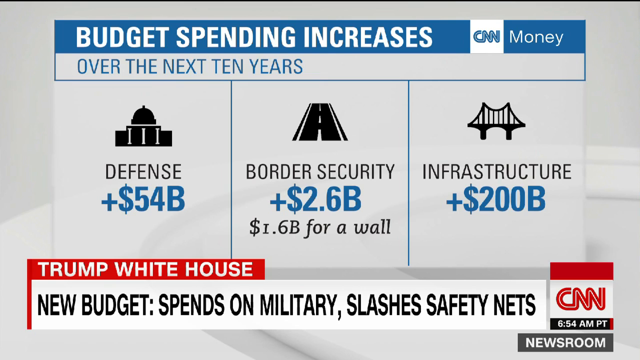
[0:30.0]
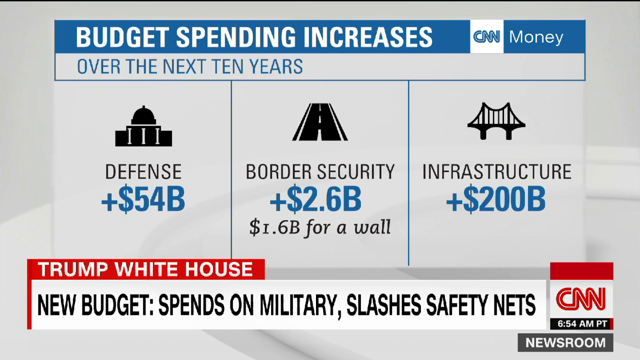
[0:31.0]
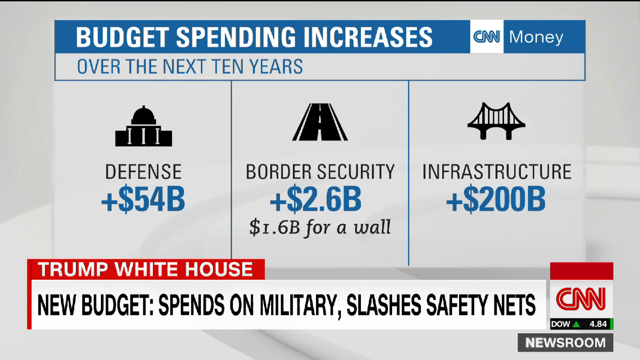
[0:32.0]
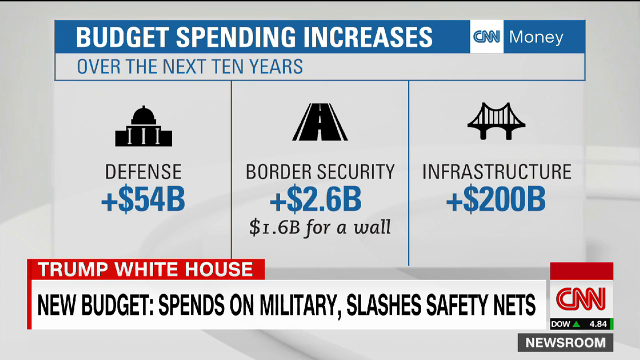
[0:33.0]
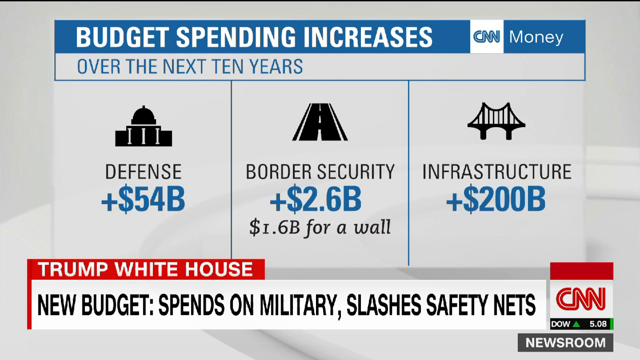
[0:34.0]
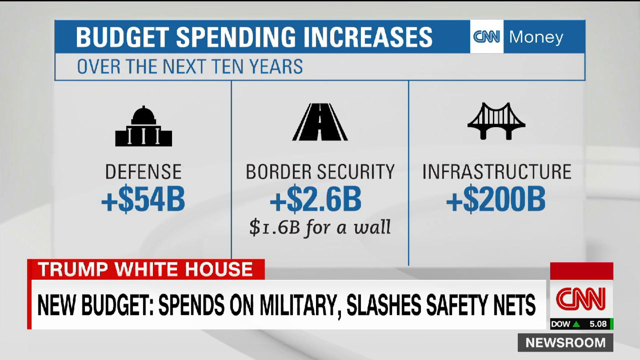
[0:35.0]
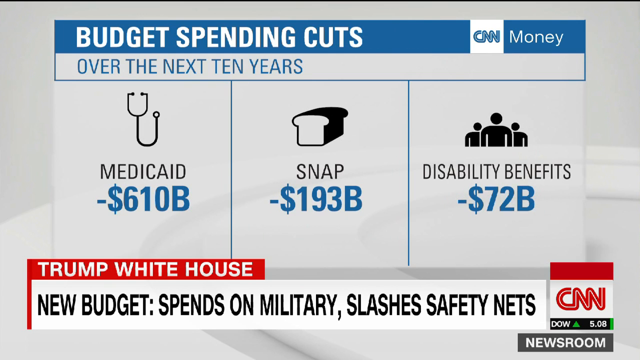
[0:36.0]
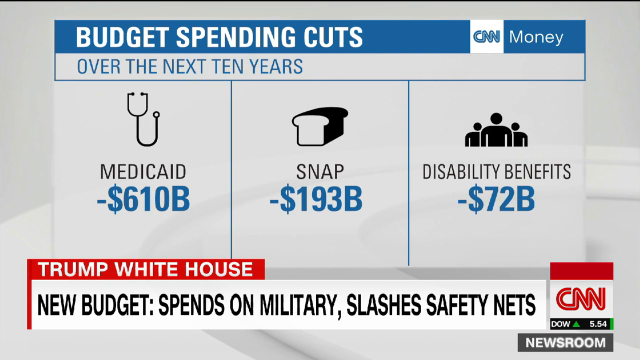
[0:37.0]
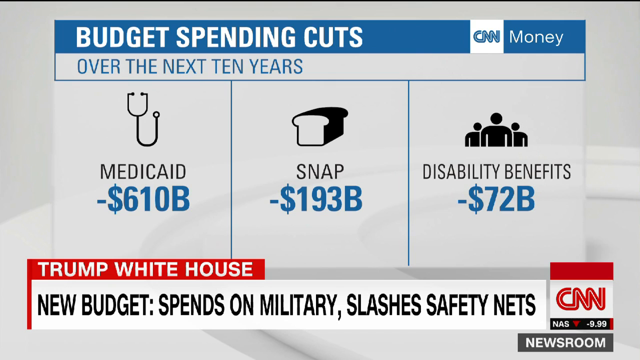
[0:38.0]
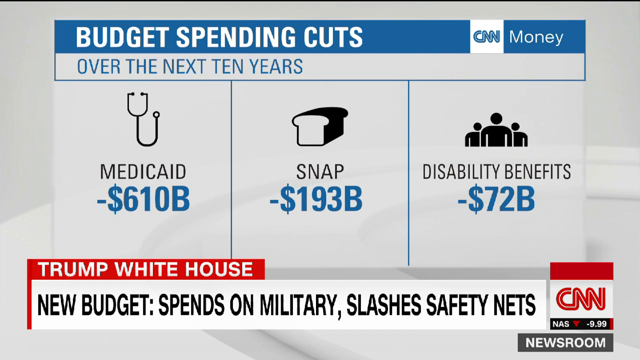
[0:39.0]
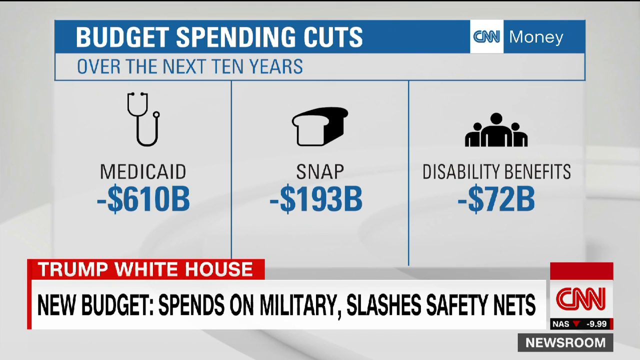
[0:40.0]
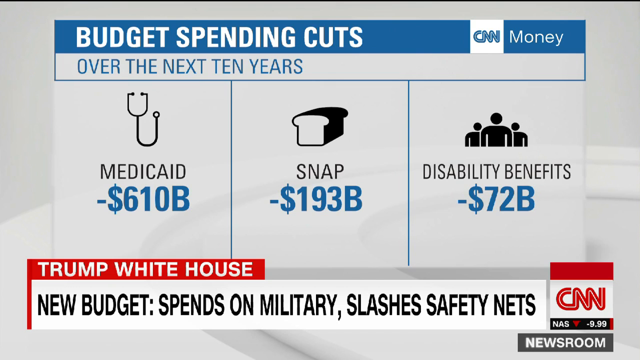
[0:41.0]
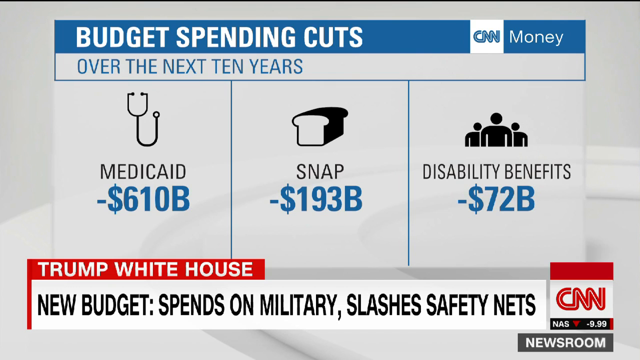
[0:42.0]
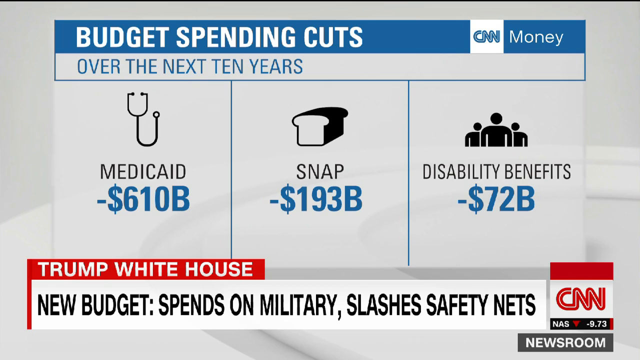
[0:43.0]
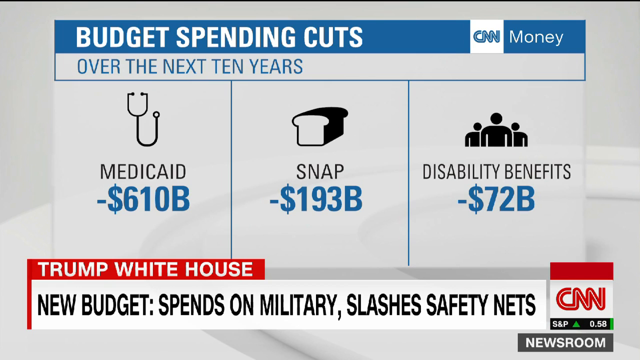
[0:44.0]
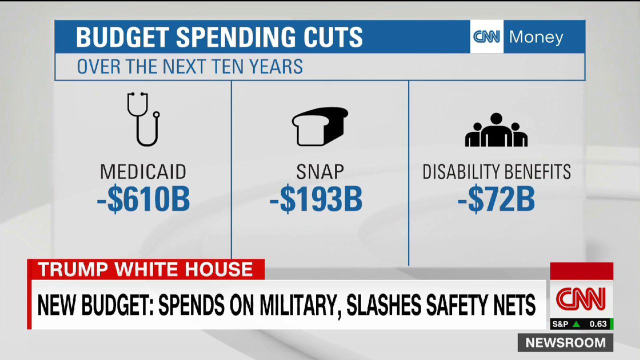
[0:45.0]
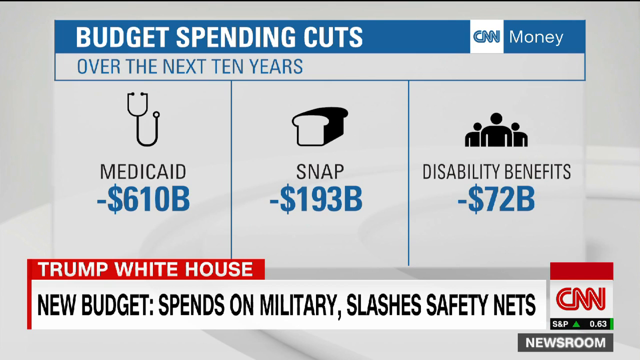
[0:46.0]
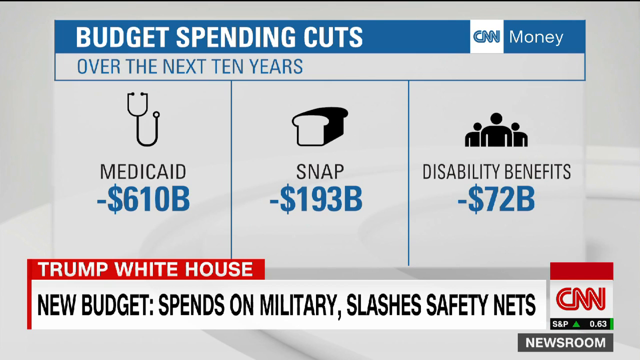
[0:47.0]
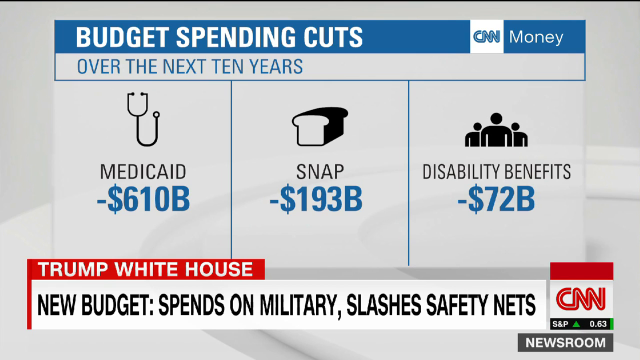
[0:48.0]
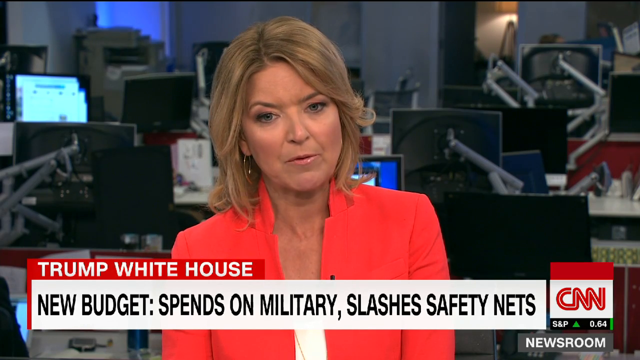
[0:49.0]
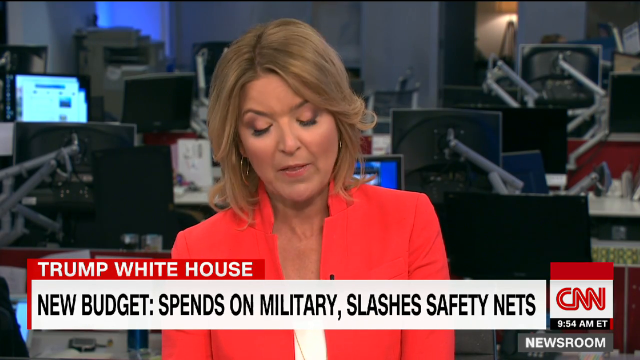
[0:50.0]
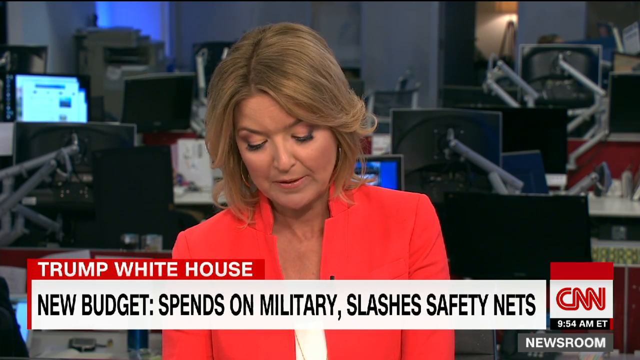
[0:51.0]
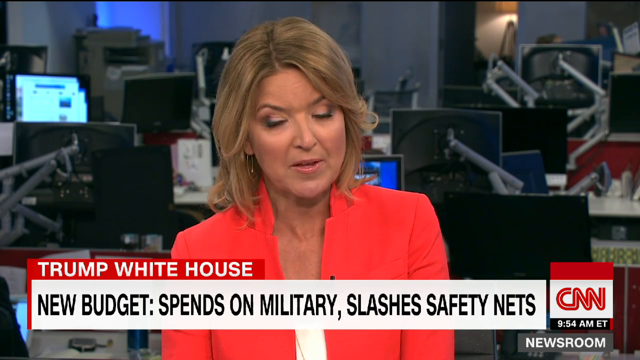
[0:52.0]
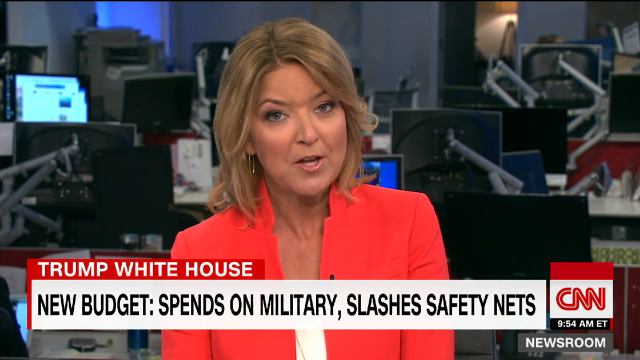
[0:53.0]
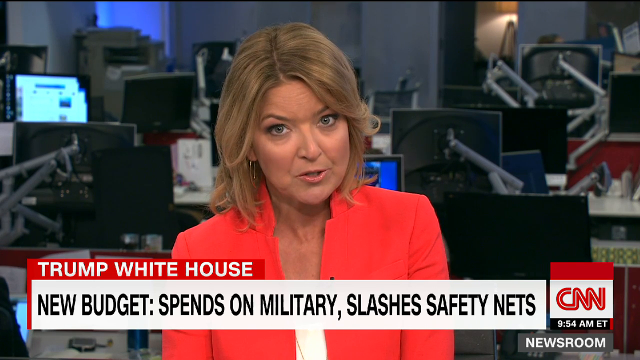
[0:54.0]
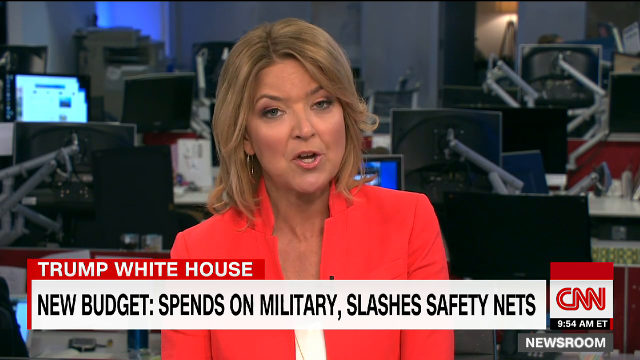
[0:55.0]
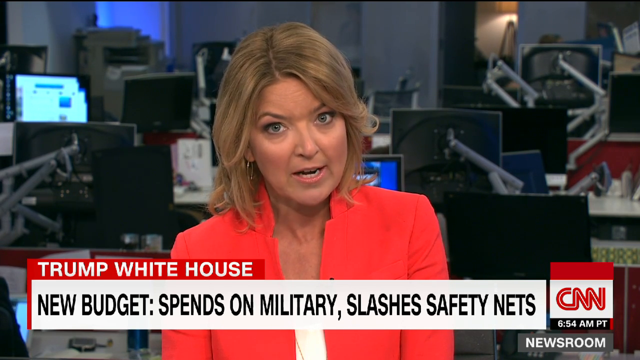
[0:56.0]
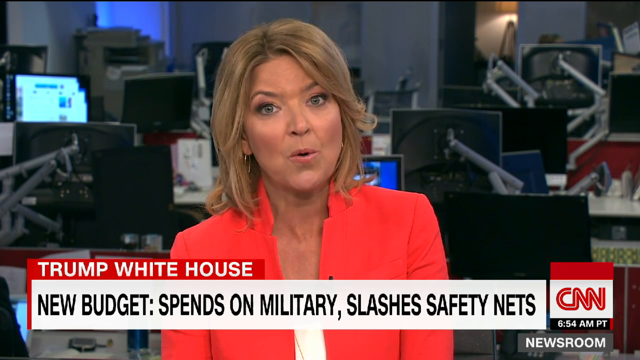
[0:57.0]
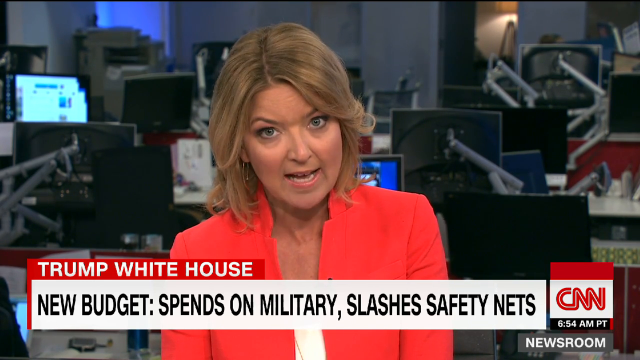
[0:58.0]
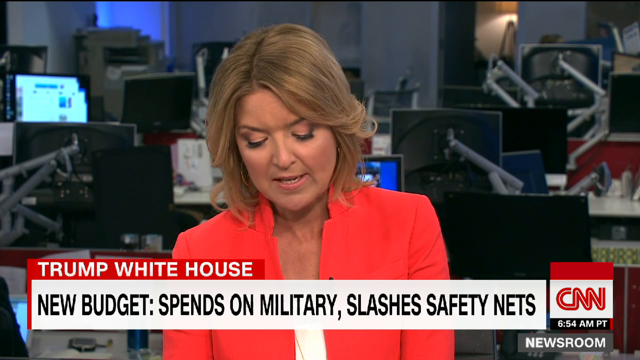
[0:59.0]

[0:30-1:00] A headline reads "Trump White House, the new budget spends on military slashes safety." Figures are listed on screen: "610" next to Medicaid, then SNAP, with amounts in billions, and disability benefits at 72 billion.